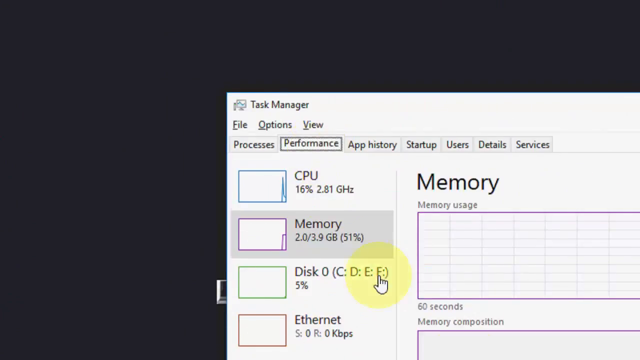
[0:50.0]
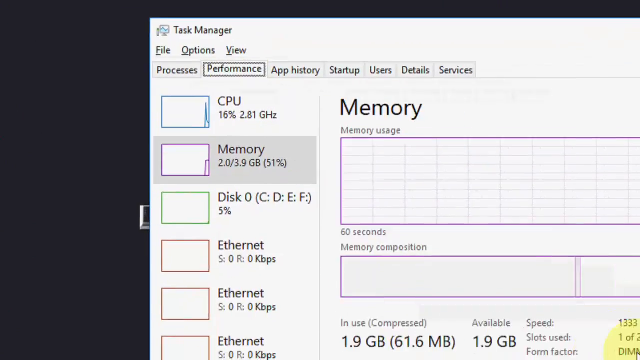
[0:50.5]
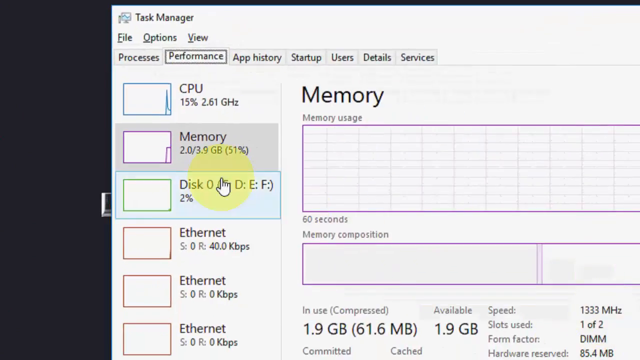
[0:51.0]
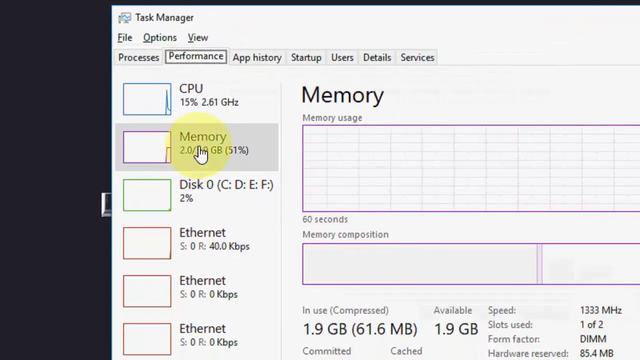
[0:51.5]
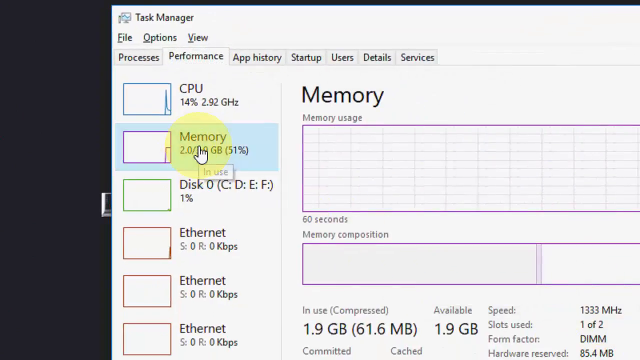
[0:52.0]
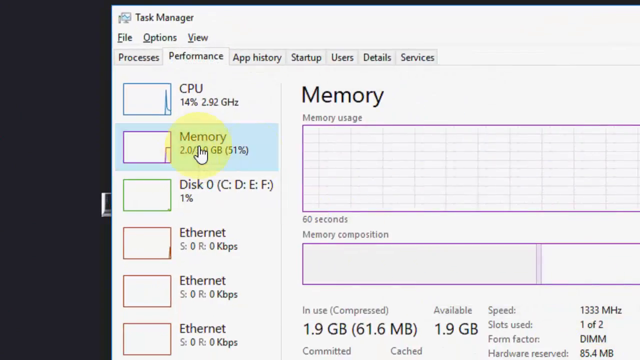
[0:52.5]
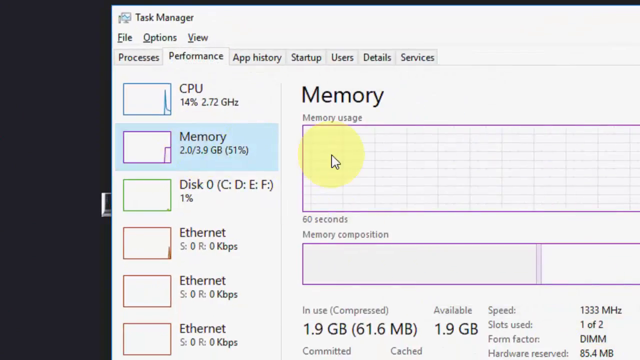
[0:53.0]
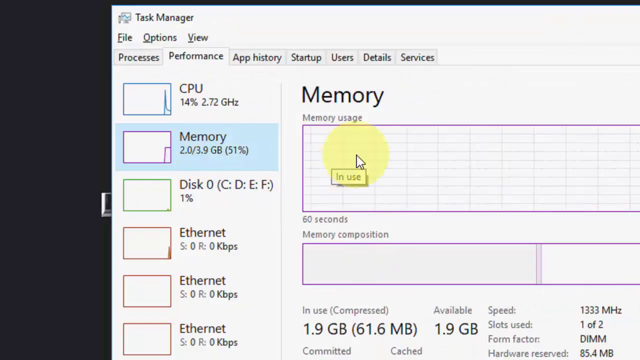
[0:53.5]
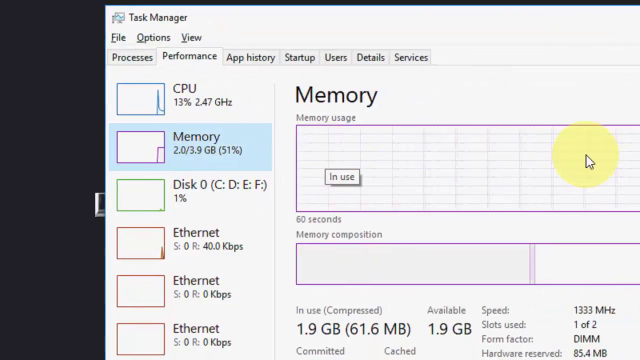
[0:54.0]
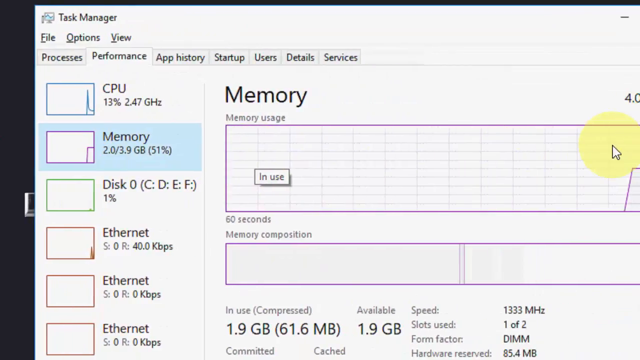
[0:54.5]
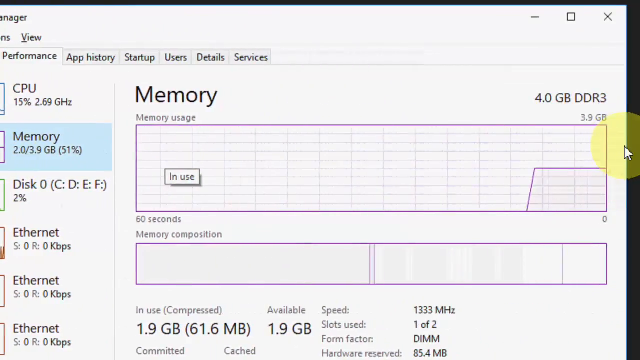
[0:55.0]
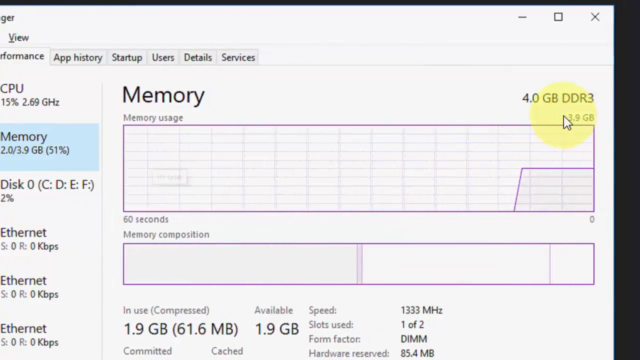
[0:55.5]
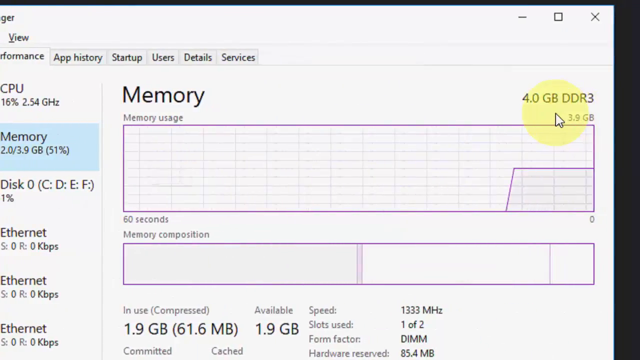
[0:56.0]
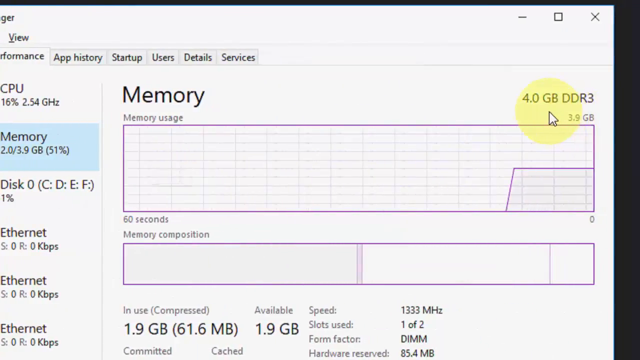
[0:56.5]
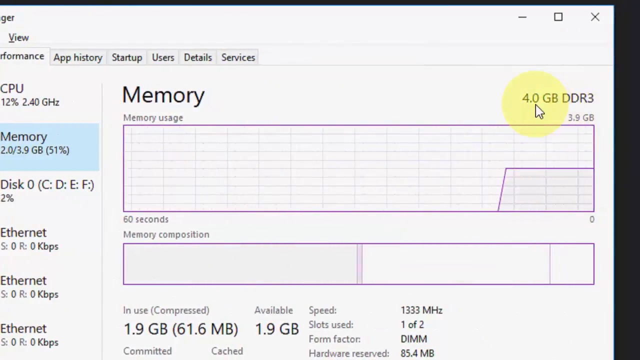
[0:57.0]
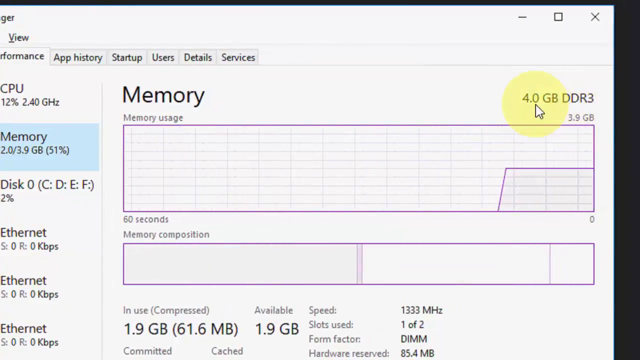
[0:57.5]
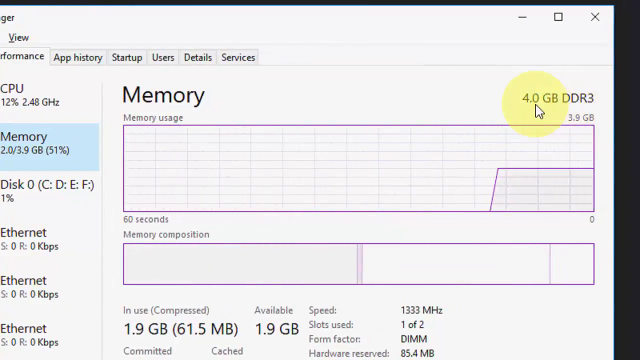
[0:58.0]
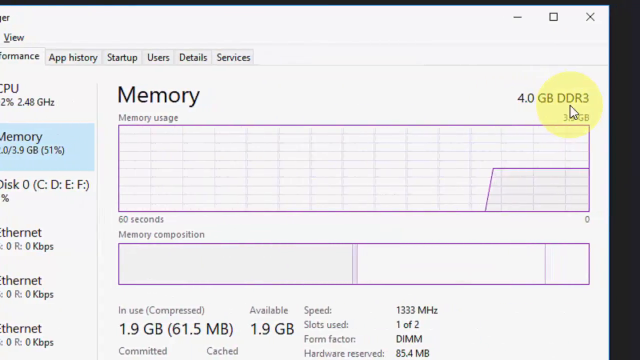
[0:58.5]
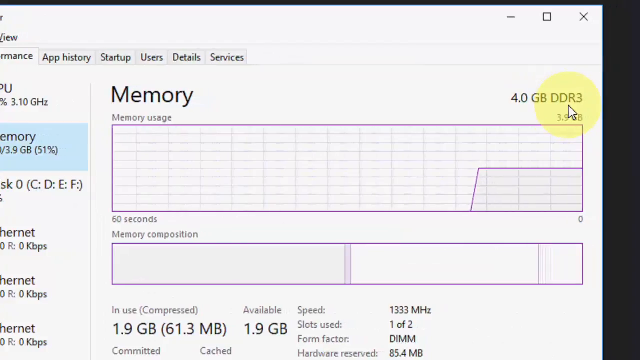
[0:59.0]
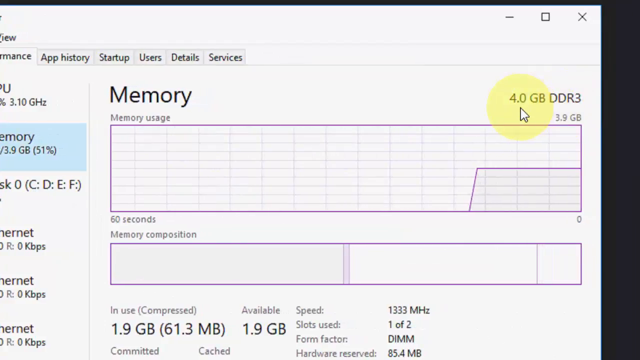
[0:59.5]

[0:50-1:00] The Performance option inside the Task Manager is now open, showing the different sections that can be monitored: CPU, Memory, Disk 0 and Ethernet, with Ethernet repeated 3 times. The Memory option is selected, showing 4GB of DDR3 RAM, with 2GB of the 4 available currently in use, or 51% of the computer's RAM. The mouse explores these options.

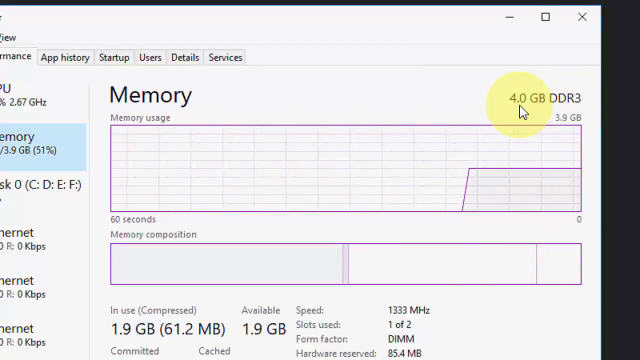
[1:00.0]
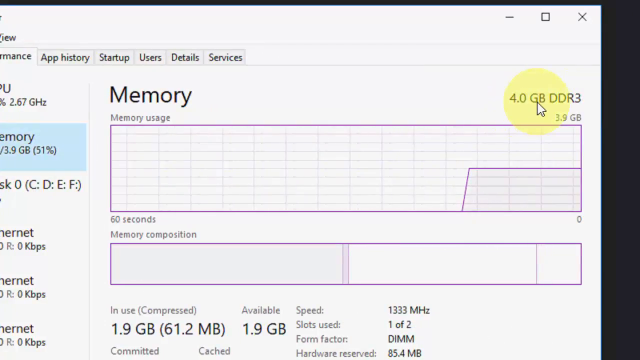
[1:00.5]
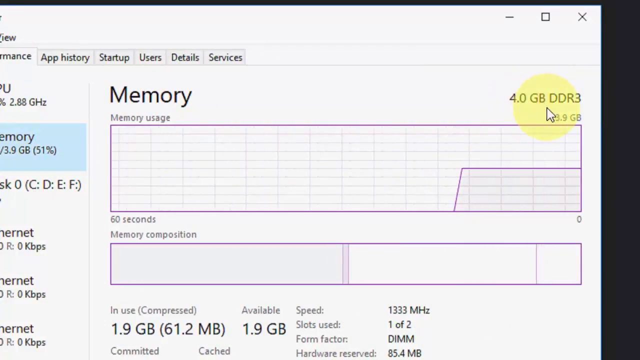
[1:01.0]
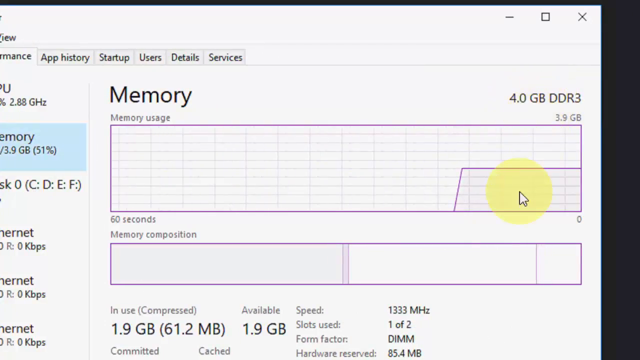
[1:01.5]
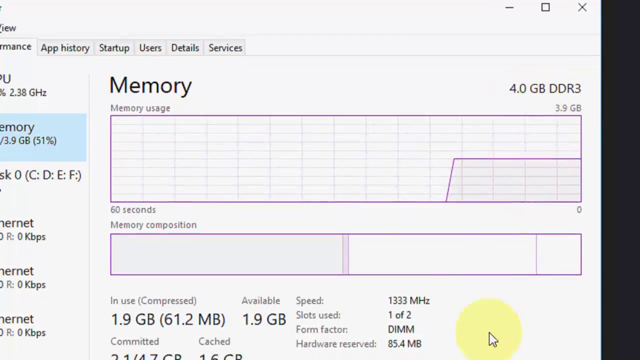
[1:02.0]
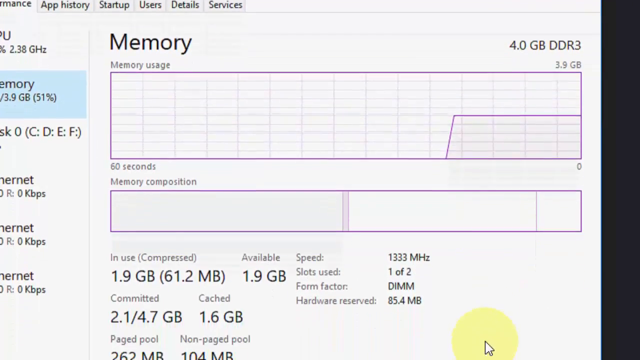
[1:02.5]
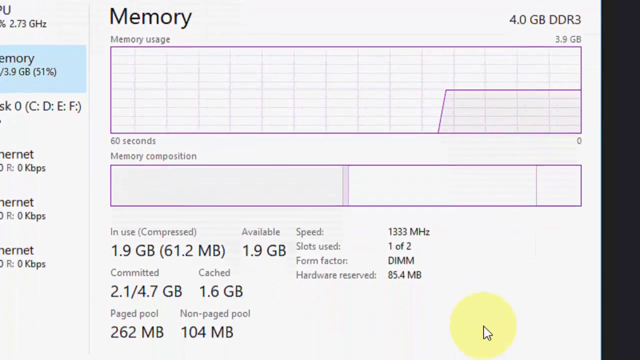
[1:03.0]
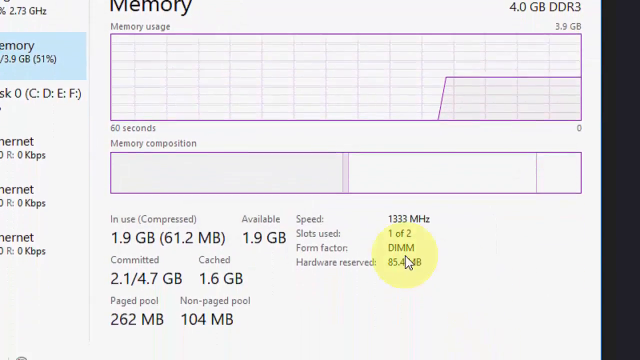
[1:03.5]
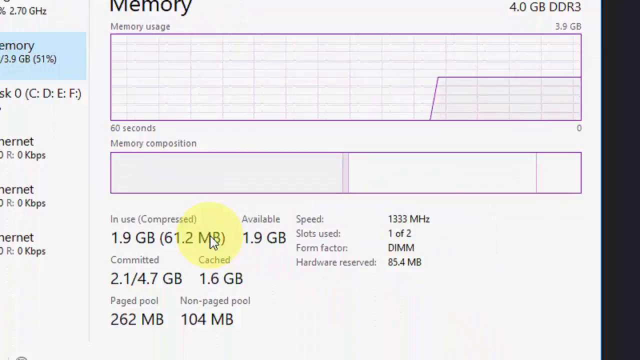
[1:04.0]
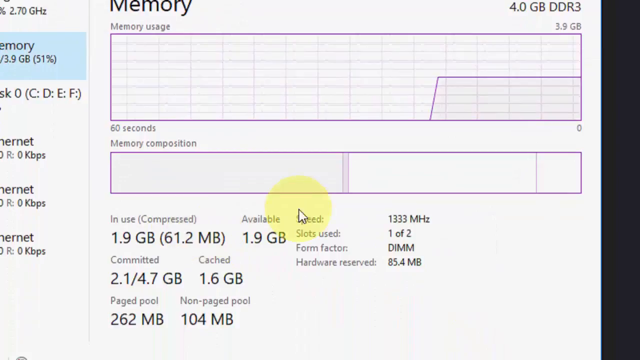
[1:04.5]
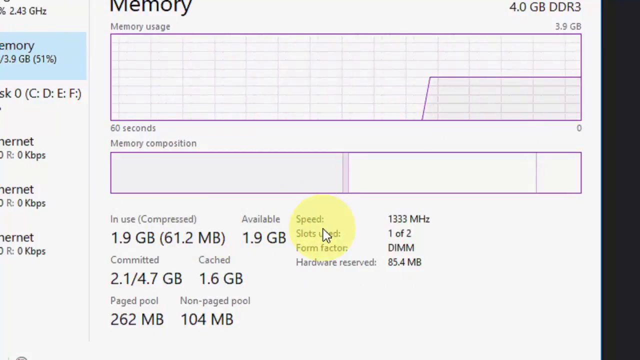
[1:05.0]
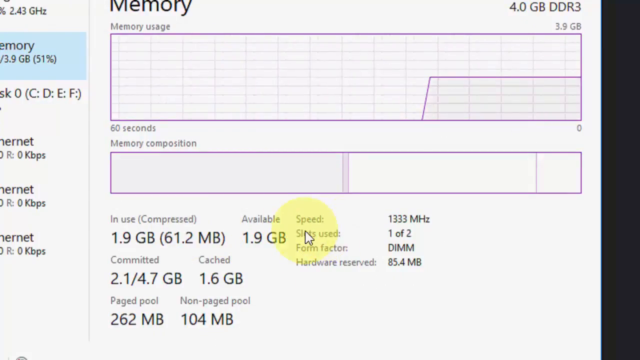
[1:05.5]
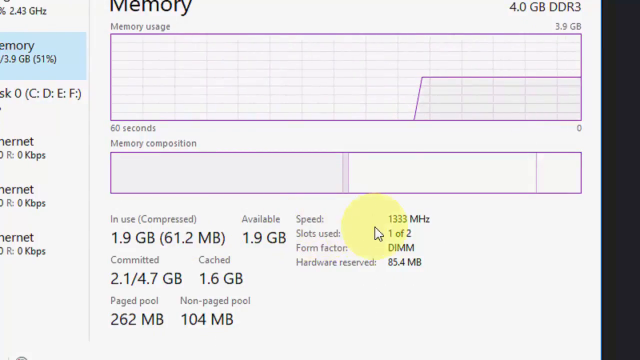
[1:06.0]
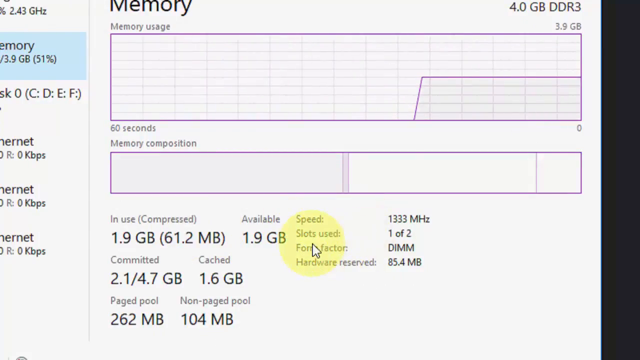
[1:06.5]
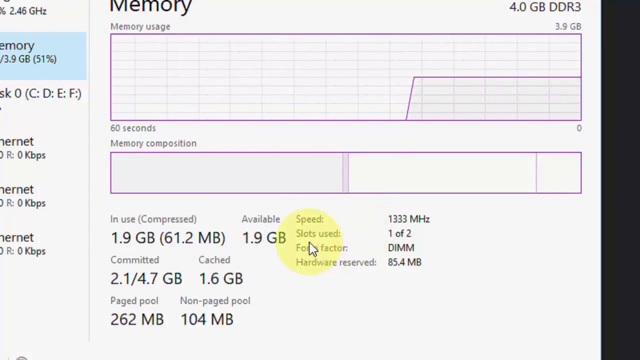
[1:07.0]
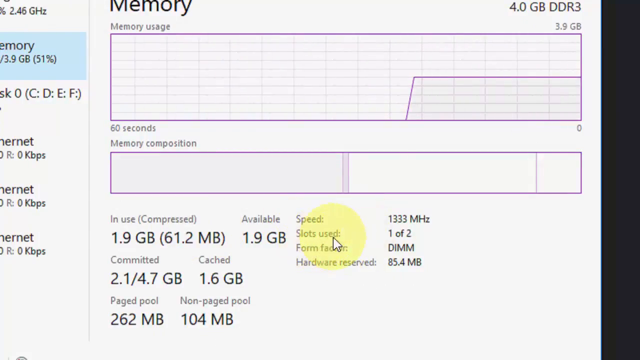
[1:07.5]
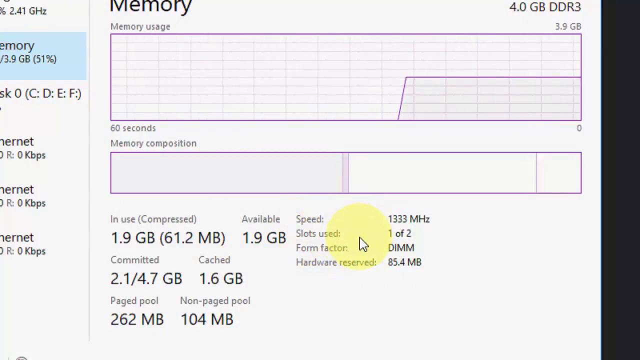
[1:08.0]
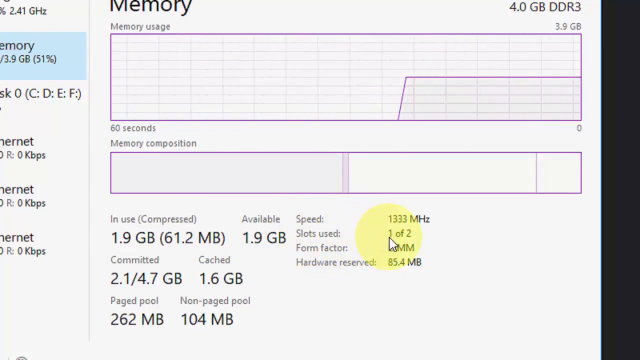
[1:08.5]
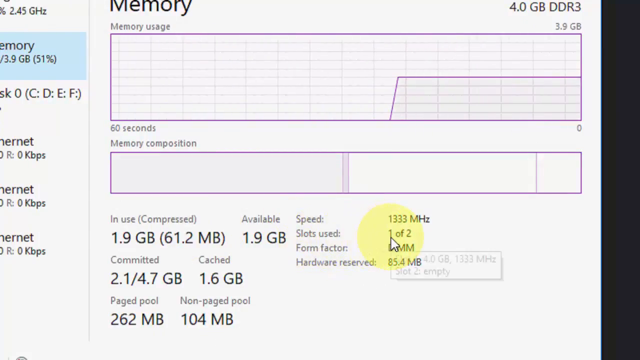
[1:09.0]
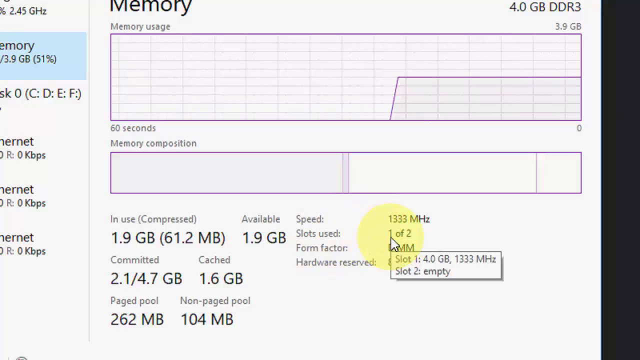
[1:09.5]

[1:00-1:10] The user is still in the Performance section, on the Memory option, which shows 2GB of the 4GB available in use. The user scrolls down to see more information: 2GB in use and 2GB still available, a speed of 1333MHz, 1 of 2 slots used, the DIMM factor, 85MB hardware reserved, 1.6GB cached, 262MB in the paged pool and 104MB in the non-paged pool.